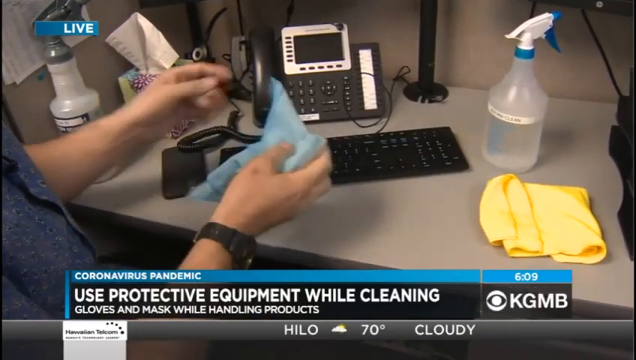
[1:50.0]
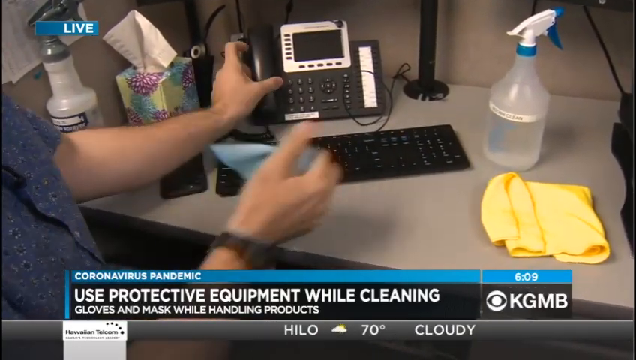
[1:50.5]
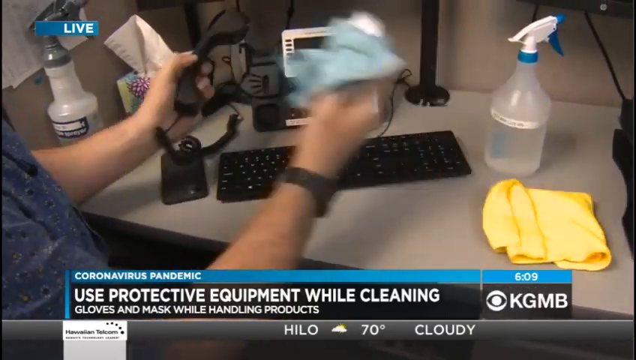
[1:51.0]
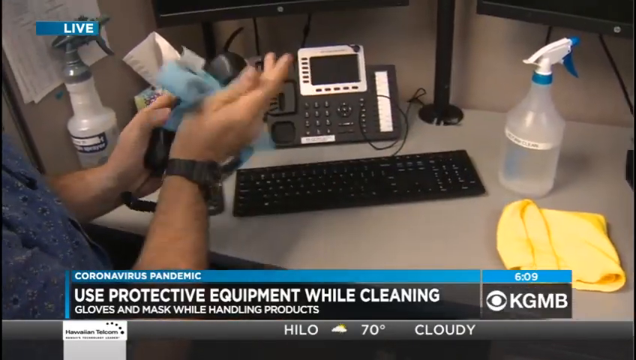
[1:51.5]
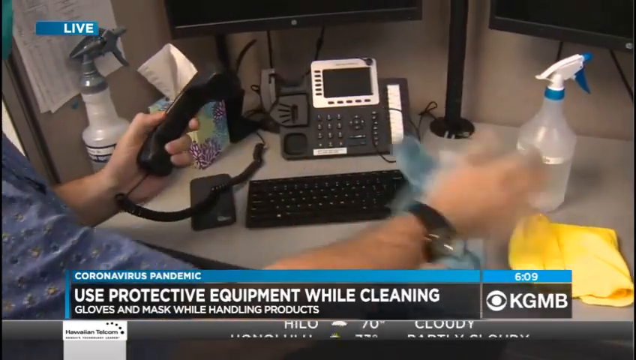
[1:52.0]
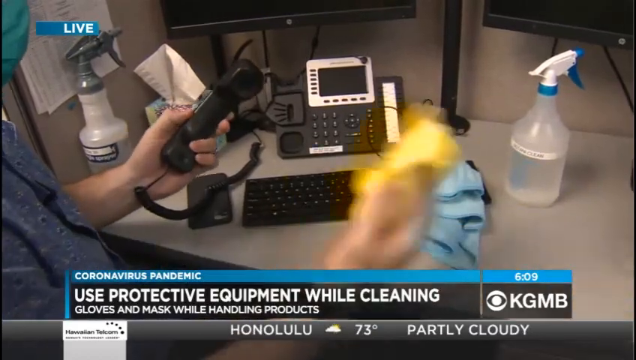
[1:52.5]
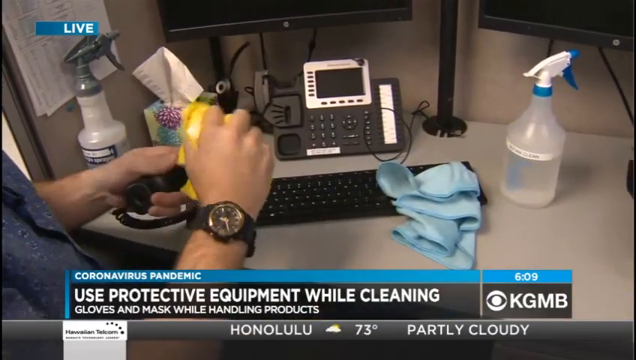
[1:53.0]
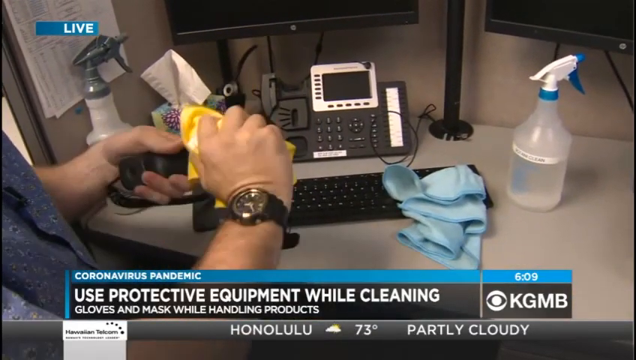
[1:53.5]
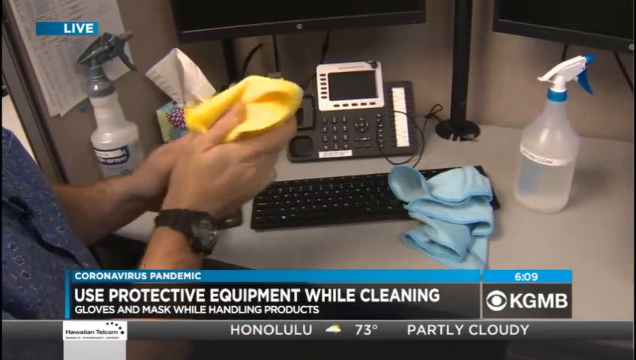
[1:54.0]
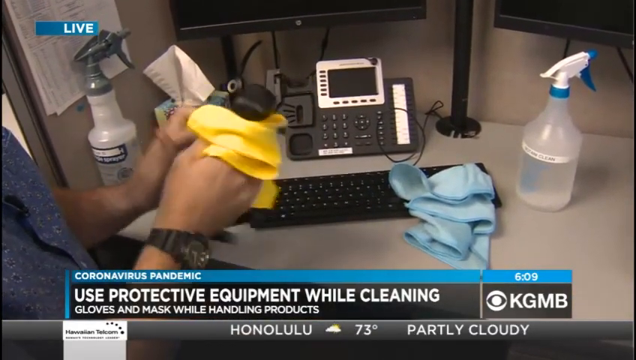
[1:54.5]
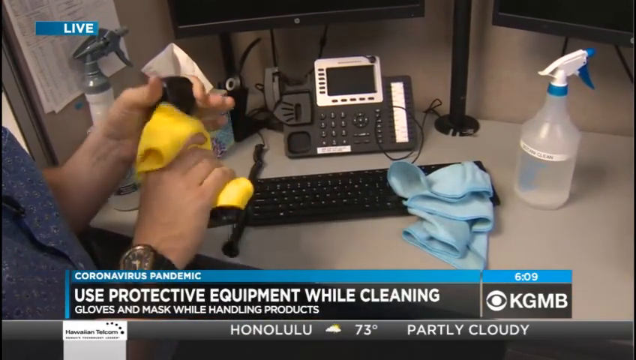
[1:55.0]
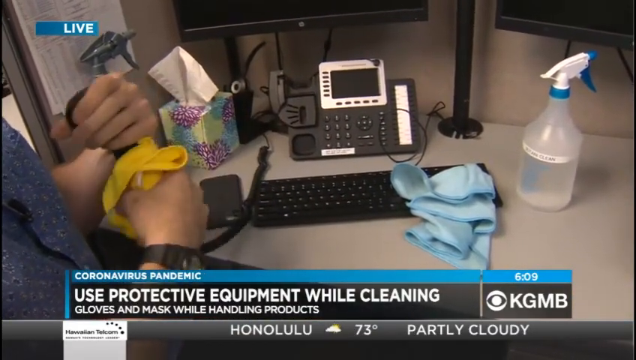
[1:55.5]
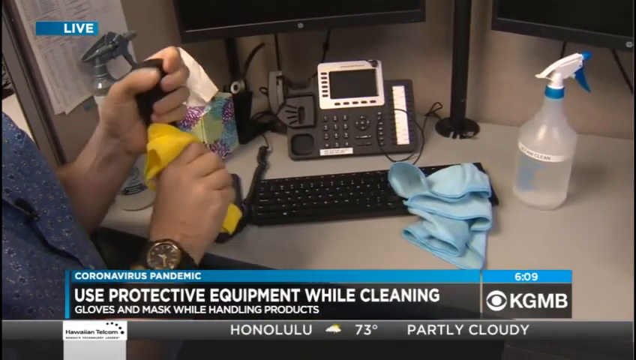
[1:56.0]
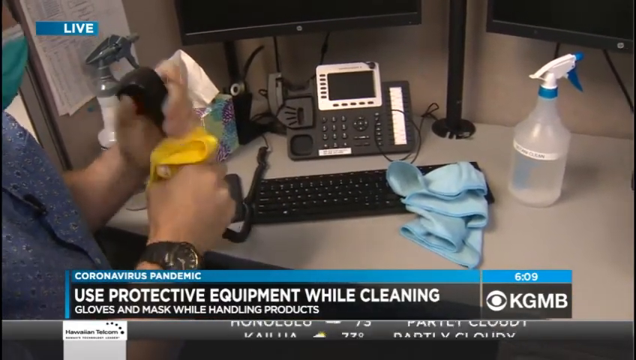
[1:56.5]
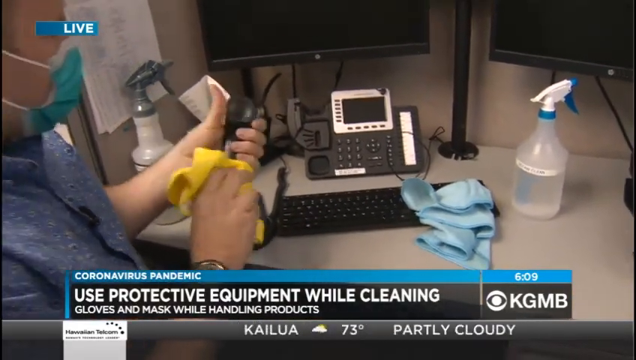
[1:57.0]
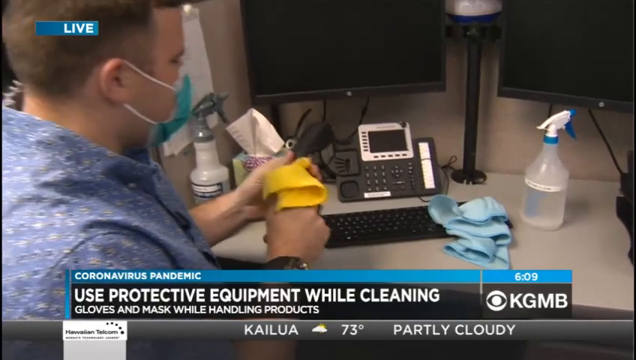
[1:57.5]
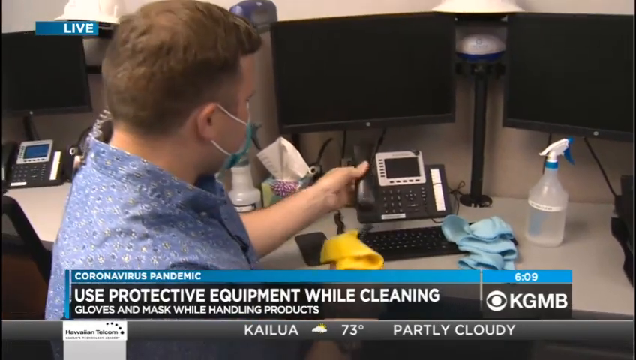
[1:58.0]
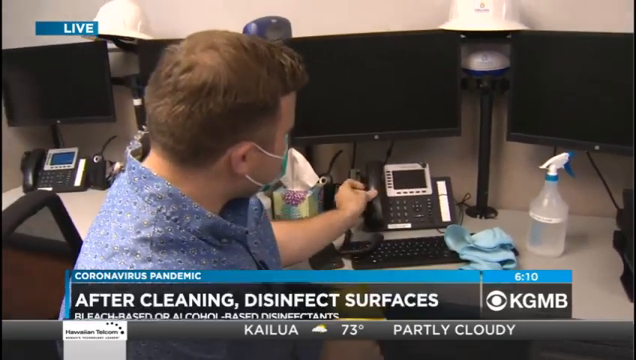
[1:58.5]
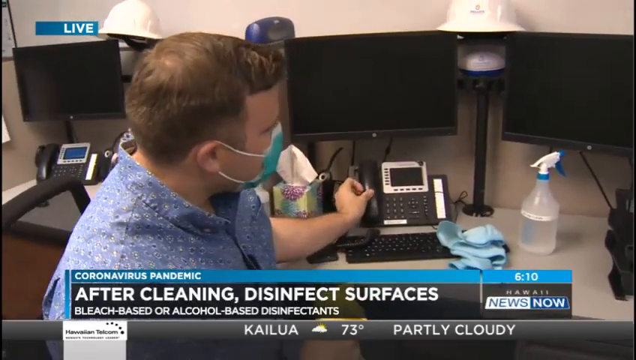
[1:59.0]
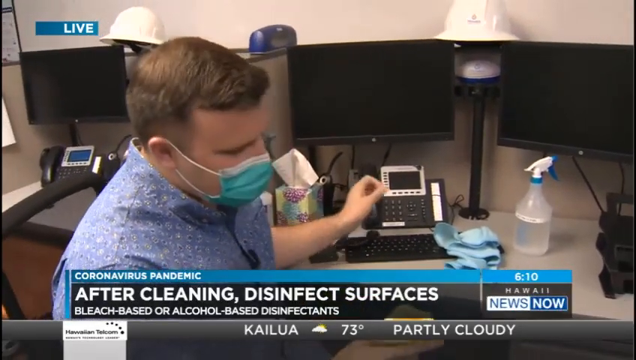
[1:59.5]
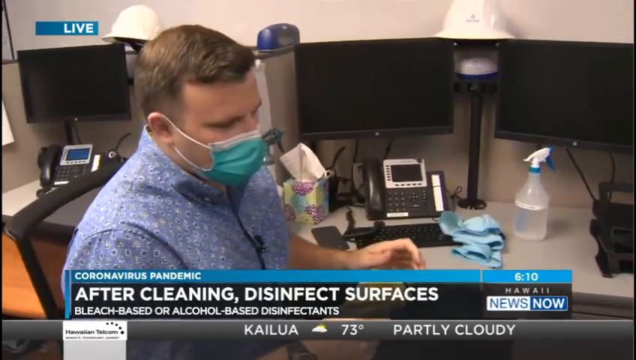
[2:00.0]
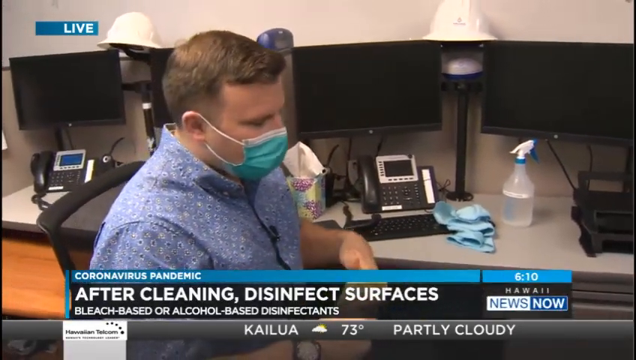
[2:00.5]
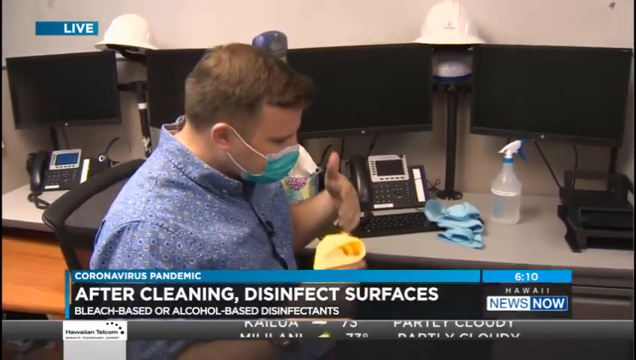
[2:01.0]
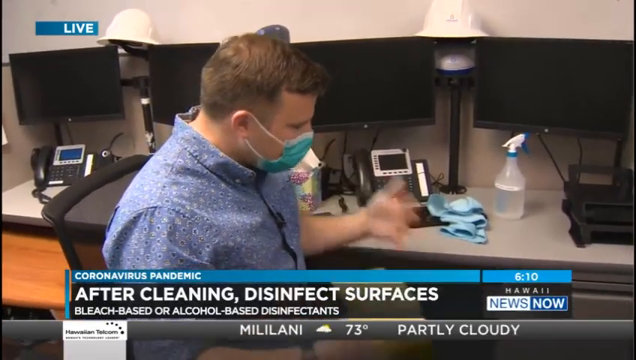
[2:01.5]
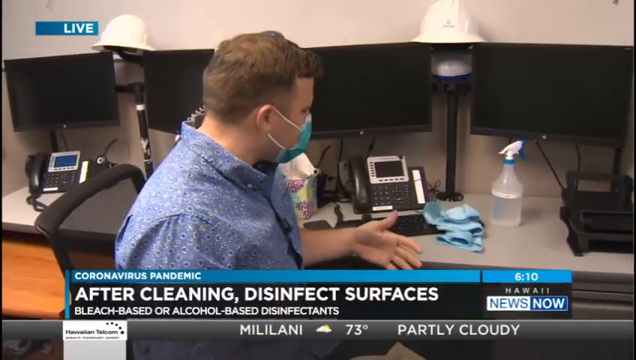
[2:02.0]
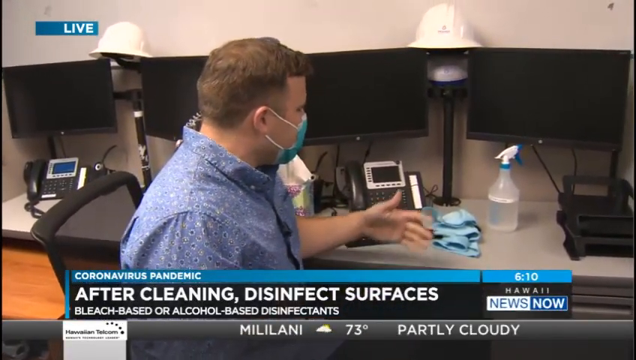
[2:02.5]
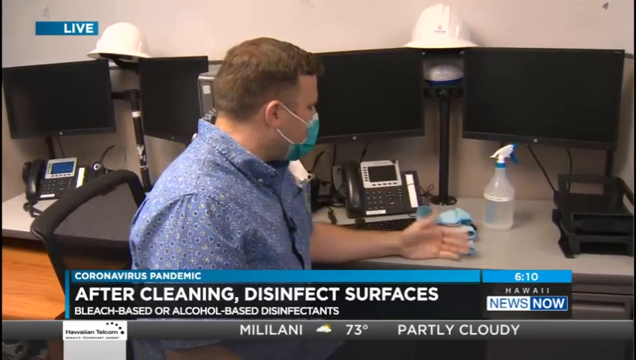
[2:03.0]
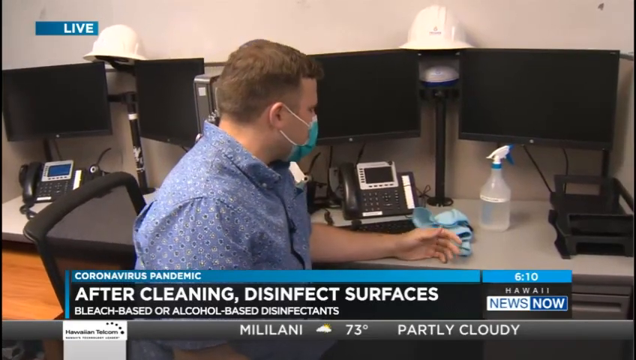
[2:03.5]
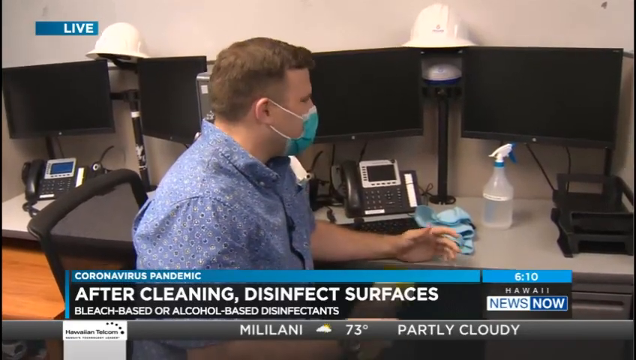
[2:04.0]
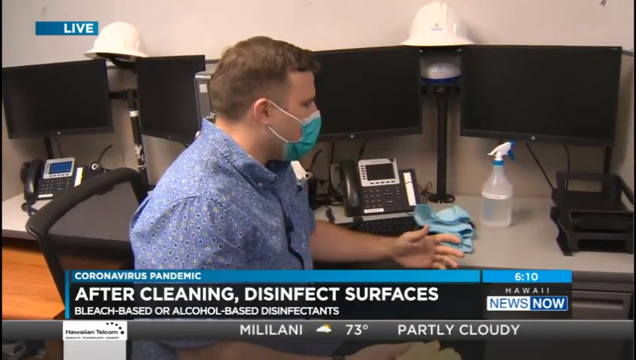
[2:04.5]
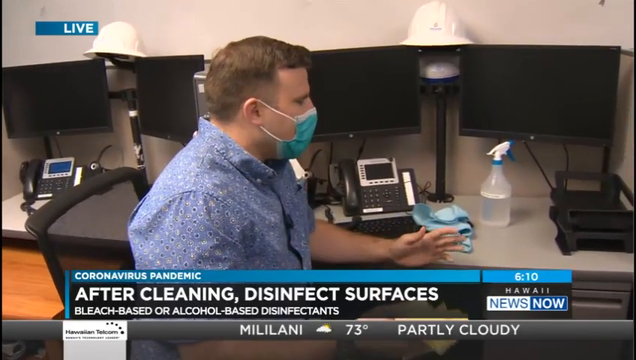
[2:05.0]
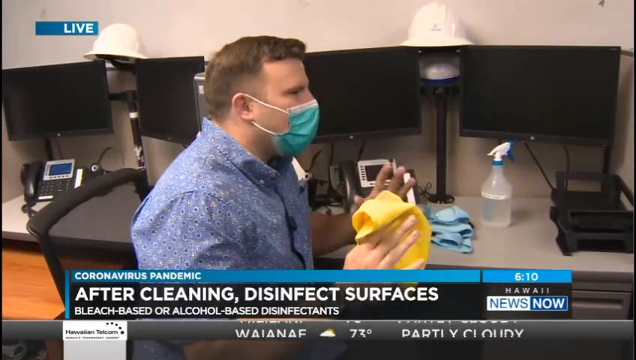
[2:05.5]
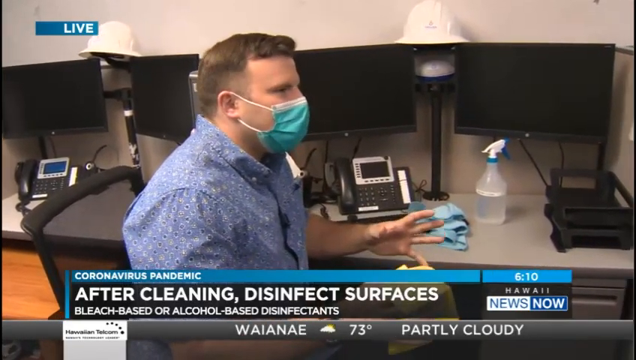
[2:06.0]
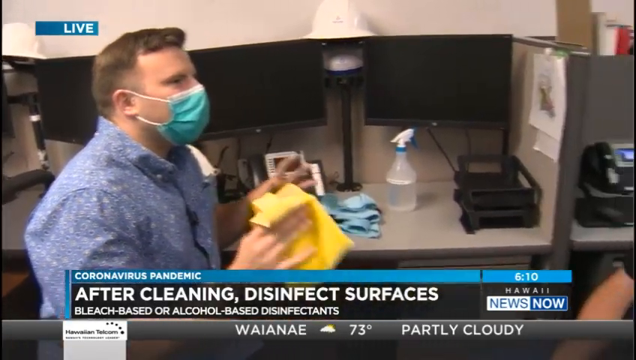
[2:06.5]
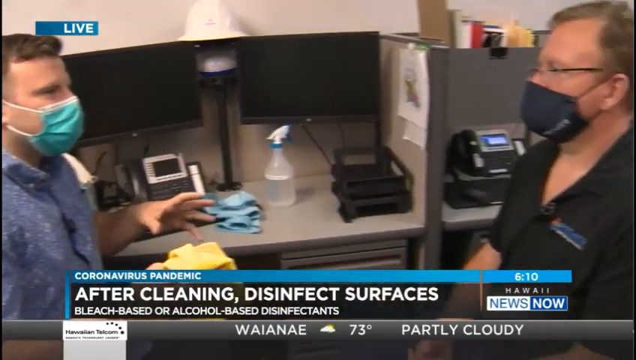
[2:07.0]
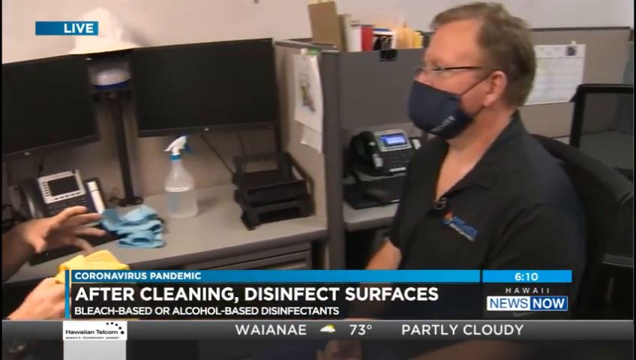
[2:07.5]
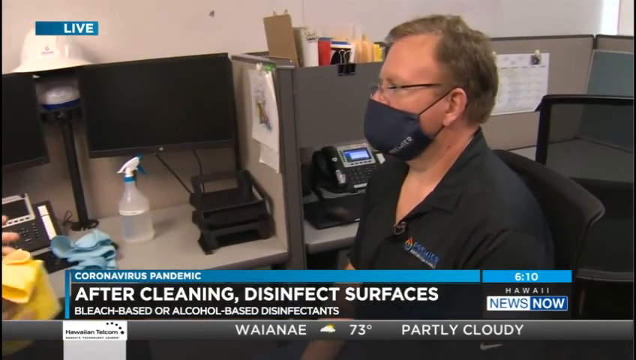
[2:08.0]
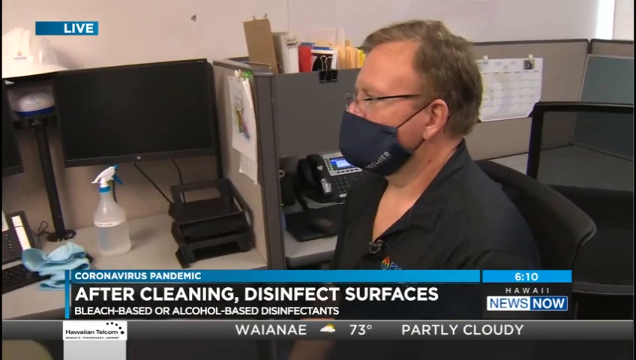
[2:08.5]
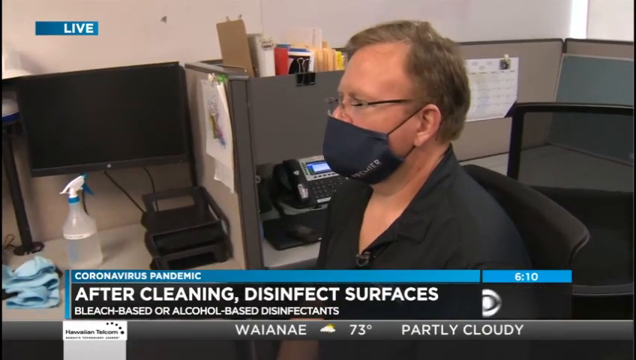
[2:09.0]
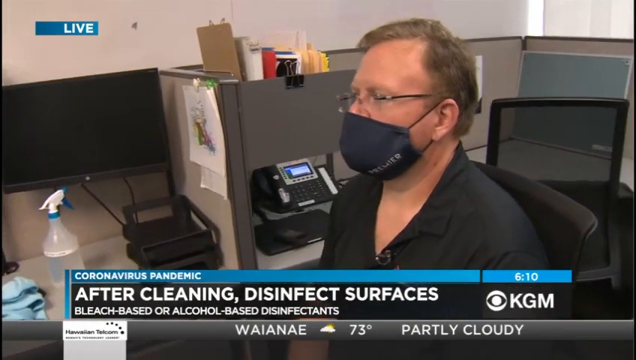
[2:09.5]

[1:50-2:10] The man on the left side of the screen grabs a blue towel and a yellow towel and wipes the phone he was wiping earlier. He keeps speaking while making hand gestures, wearing a face mask. On the right, the other man is sitting in front of him, also wearing a face mask. Text in the lower left corner reads "coronavirus pandemic", "after cleaning disinfect surfaces" and "bleach-based or alcohol-based disinfectants". Objects on the desk include a telephone, a computer keyboard, a spray bottle, blue and yellow towels and a Kleenex container. The rectangular video is filmed indoors with plenty of artificial light, keeping everything clear and visible.